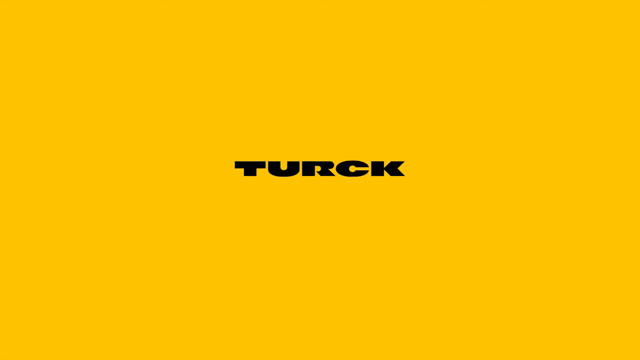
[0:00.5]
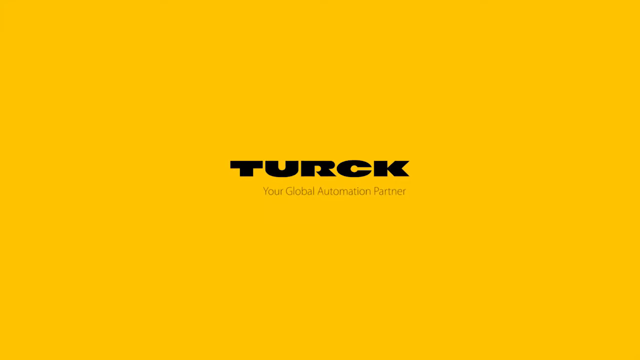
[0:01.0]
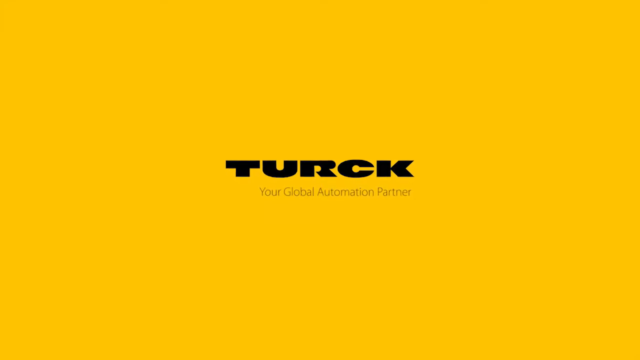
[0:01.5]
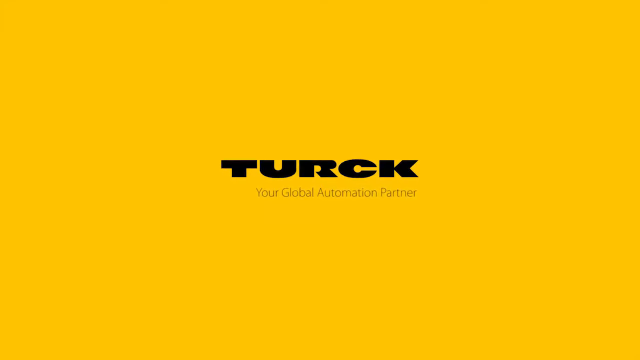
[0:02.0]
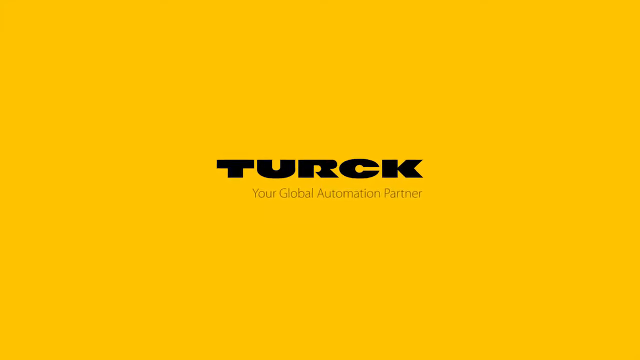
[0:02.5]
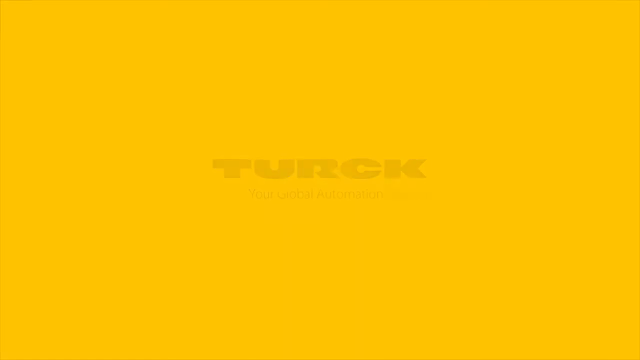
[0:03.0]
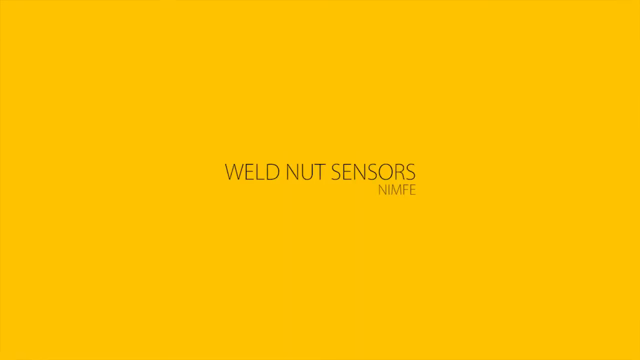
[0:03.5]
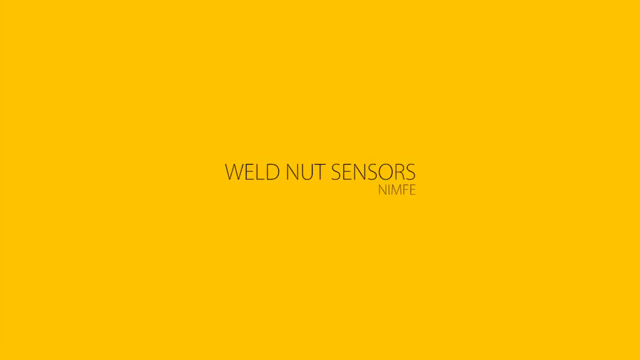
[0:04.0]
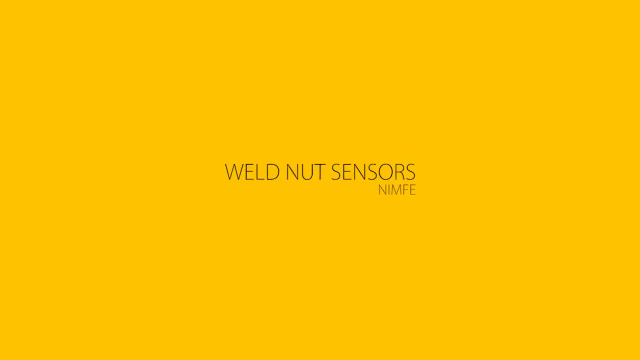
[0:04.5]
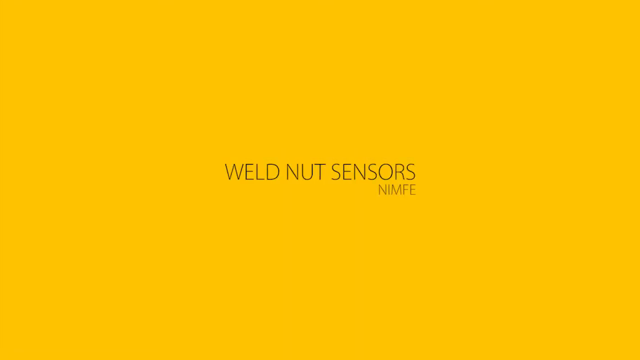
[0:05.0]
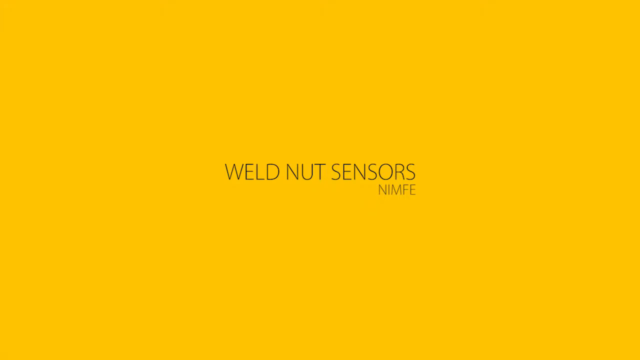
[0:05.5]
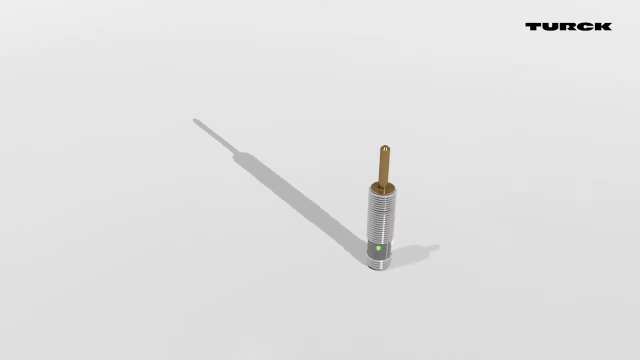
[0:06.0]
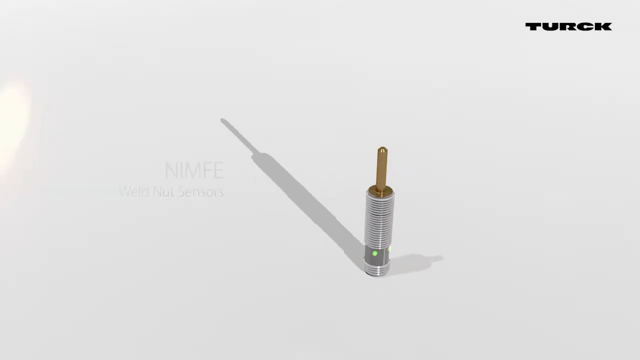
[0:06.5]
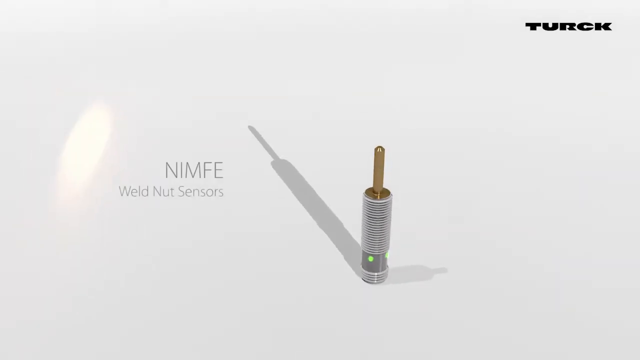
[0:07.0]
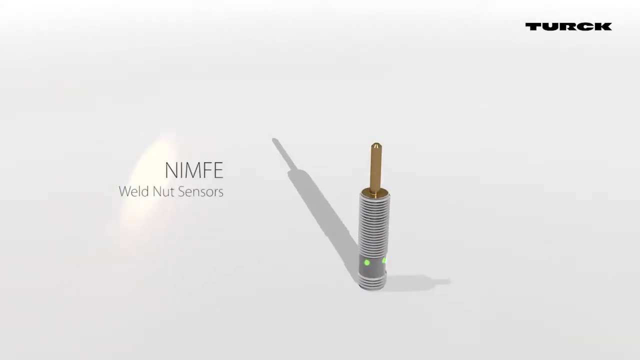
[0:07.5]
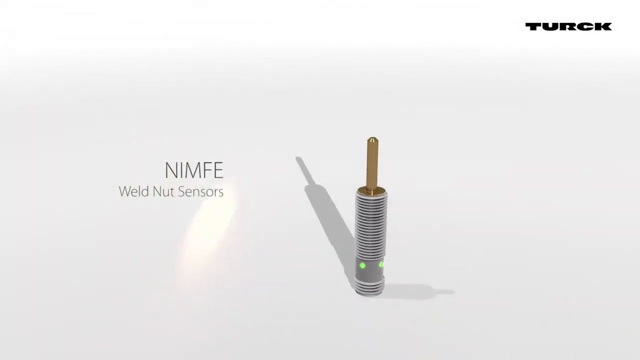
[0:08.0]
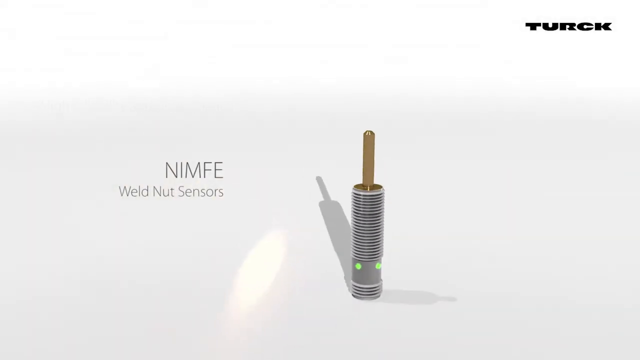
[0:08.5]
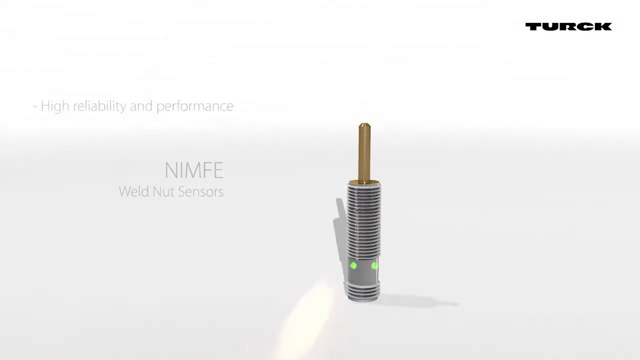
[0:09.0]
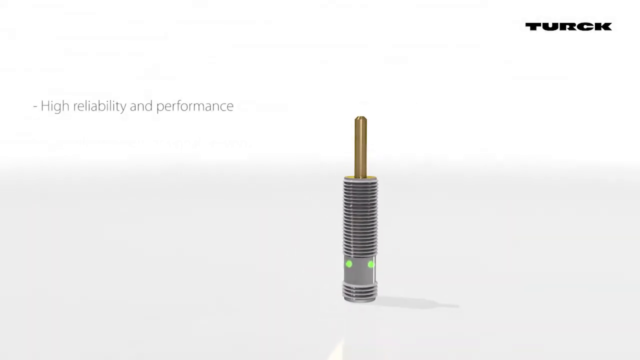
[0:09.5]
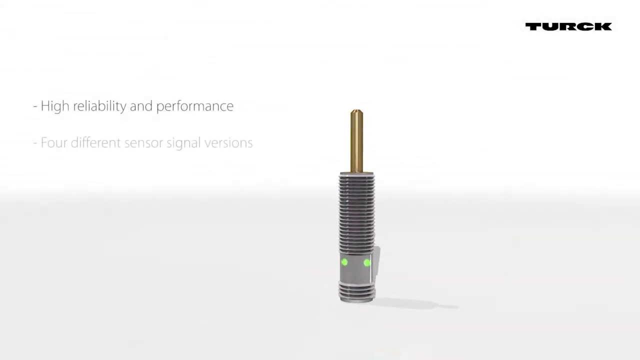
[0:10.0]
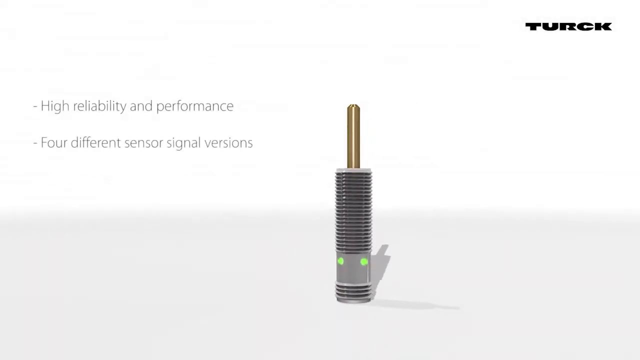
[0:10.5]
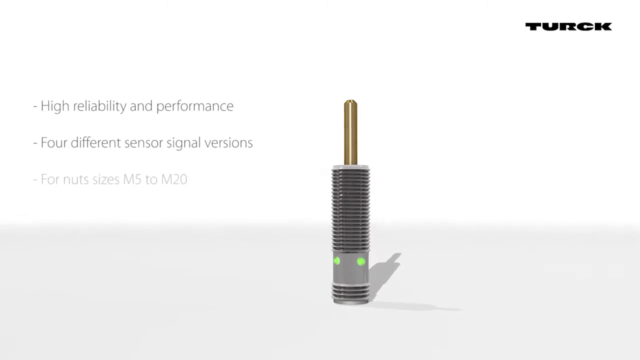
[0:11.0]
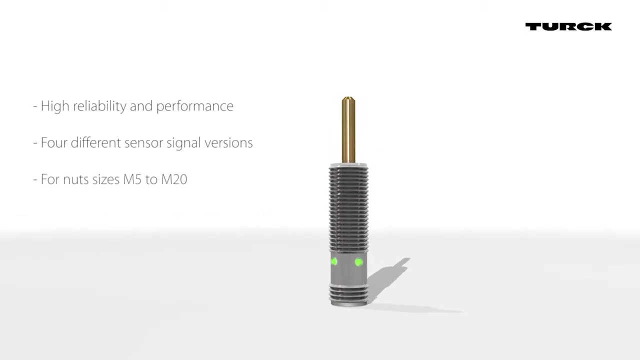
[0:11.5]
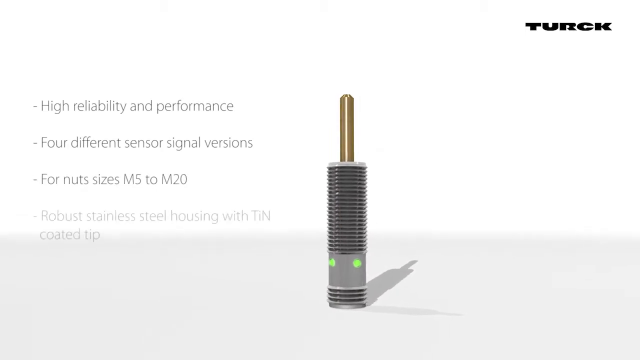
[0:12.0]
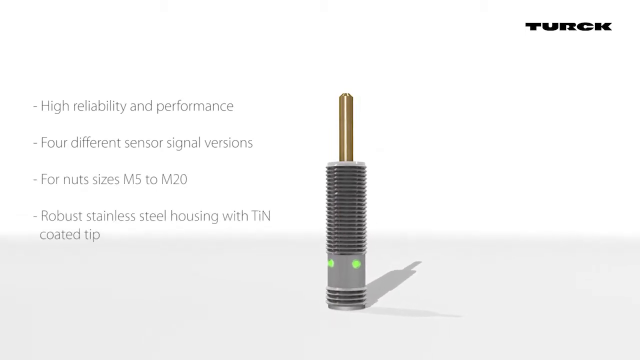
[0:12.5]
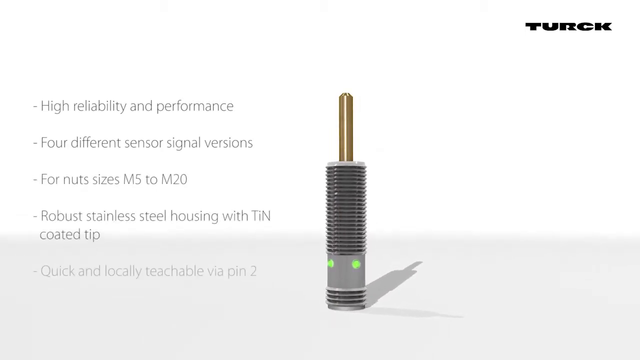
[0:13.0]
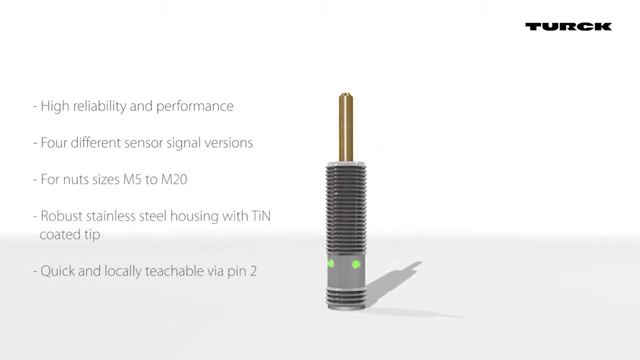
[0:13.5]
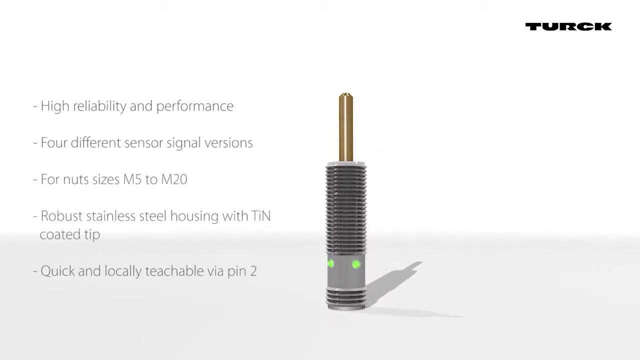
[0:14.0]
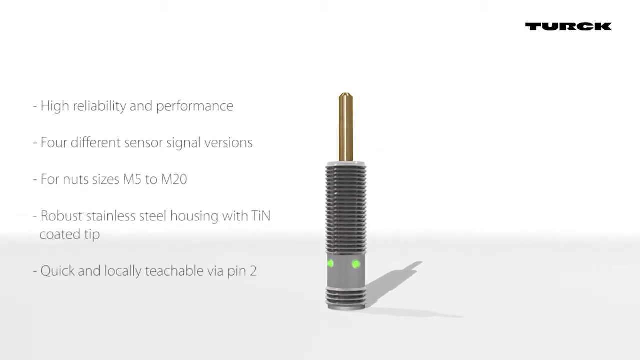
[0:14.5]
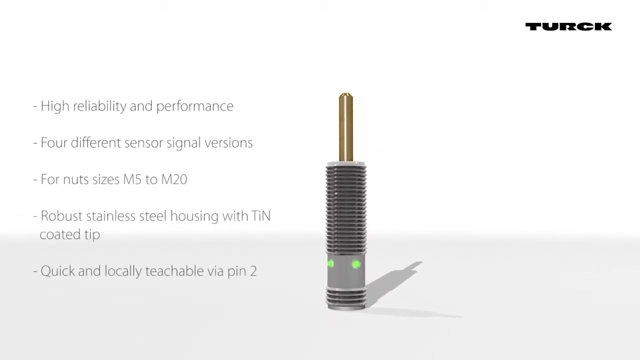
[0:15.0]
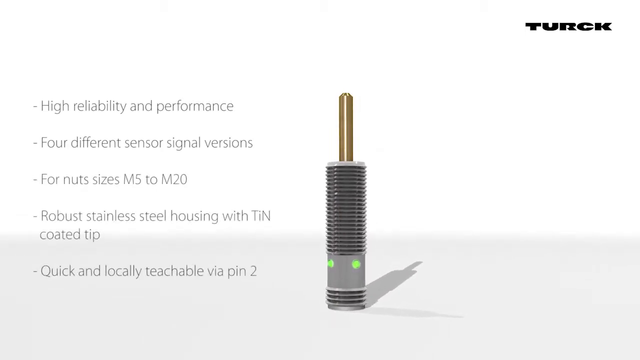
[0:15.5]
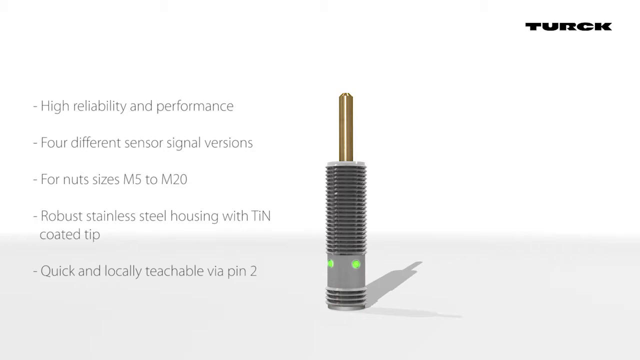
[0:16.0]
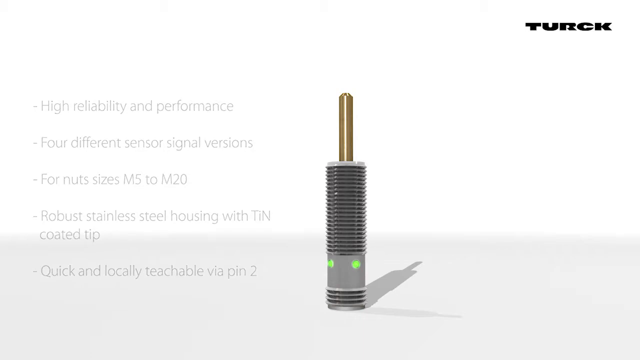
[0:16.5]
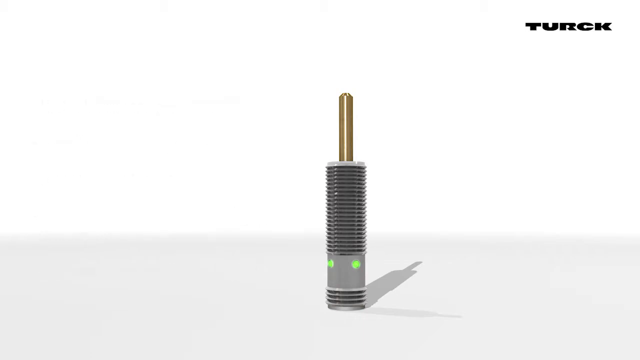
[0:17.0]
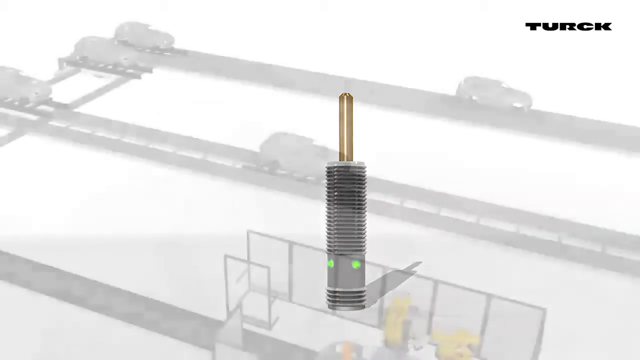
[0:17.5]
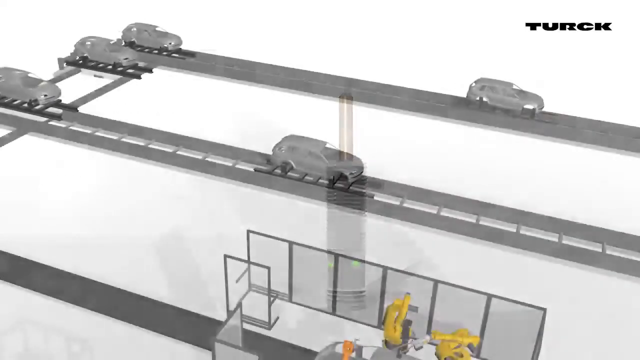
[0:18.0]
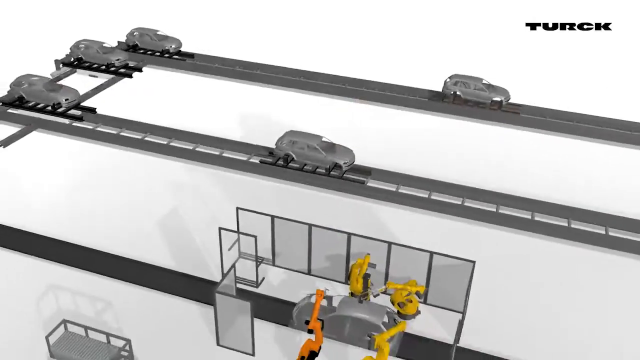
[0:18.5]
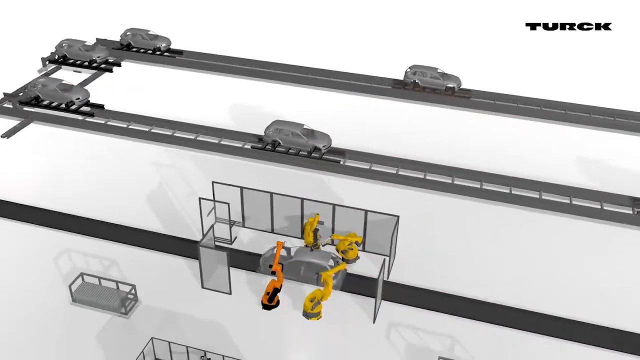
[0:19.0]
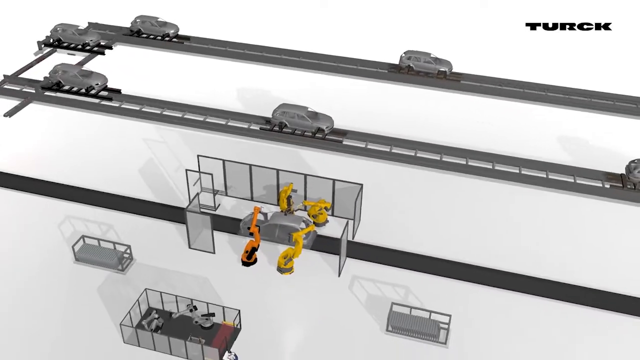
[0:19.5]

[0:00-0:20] A picture shows a design of a sensor for a vehicle, apparently a truck, from a company. Details of the sensor are given, including a stainless steel housing with steel casted tips. The design presents what the sensor is made for, its functionality, how it looks, and the materials used in making it.